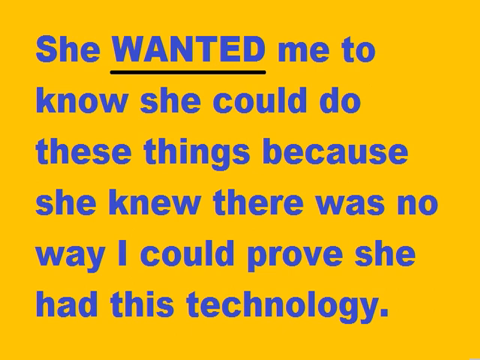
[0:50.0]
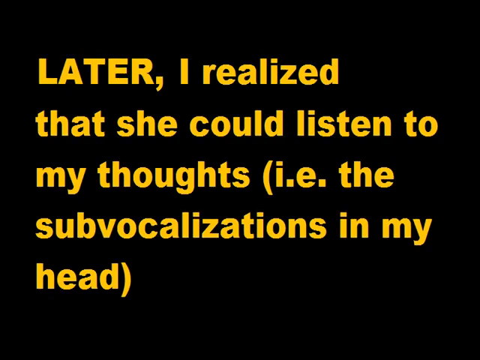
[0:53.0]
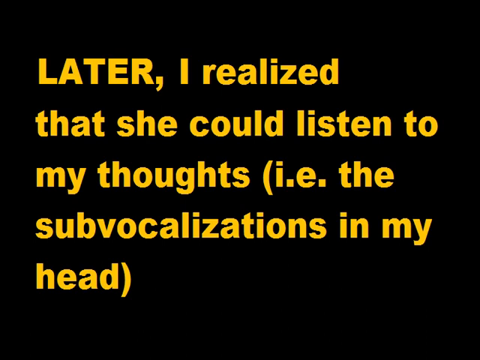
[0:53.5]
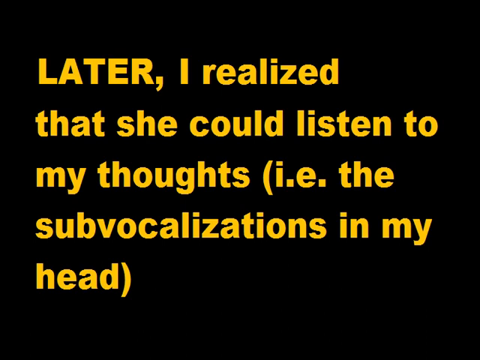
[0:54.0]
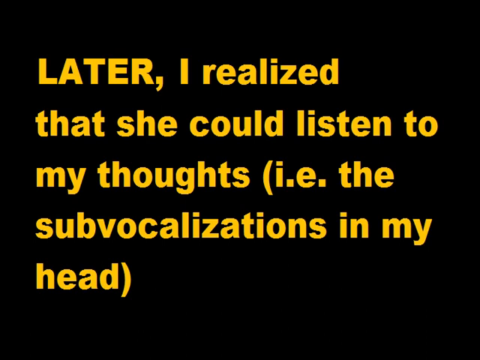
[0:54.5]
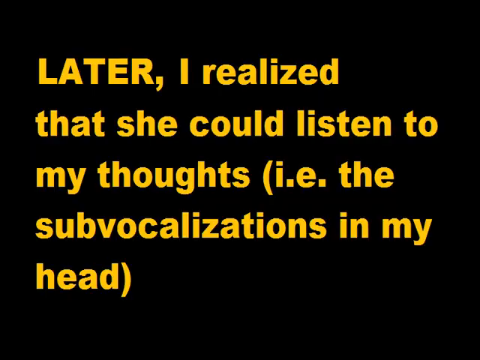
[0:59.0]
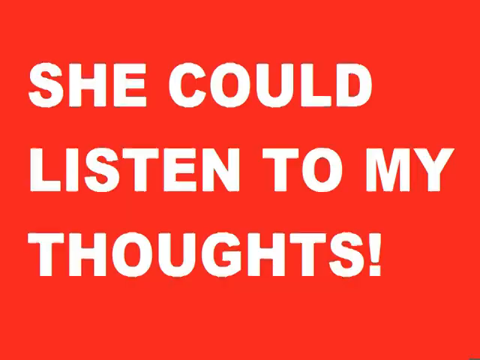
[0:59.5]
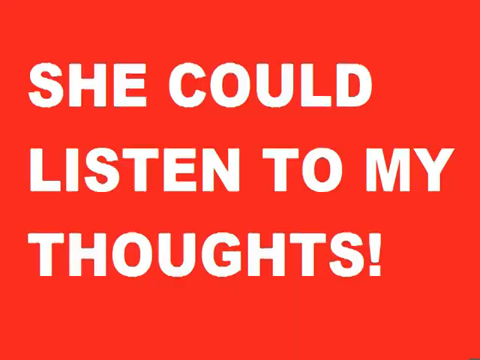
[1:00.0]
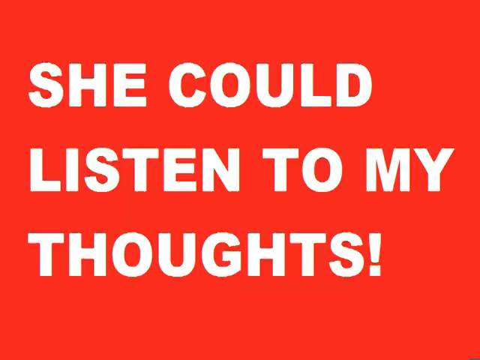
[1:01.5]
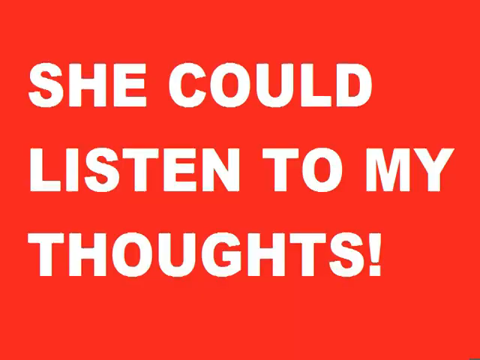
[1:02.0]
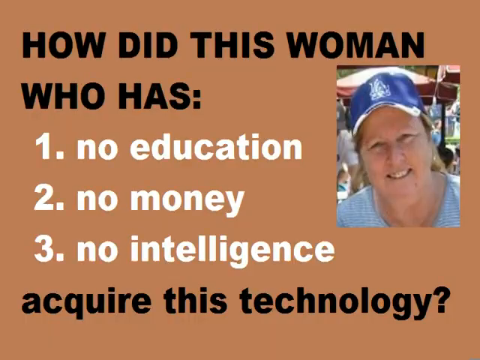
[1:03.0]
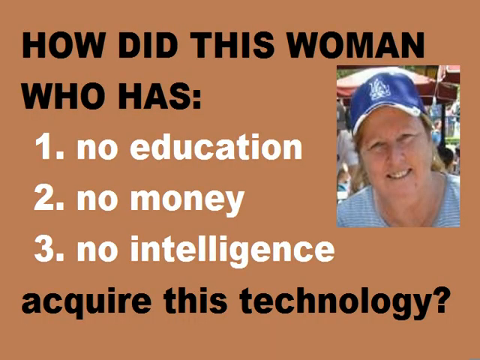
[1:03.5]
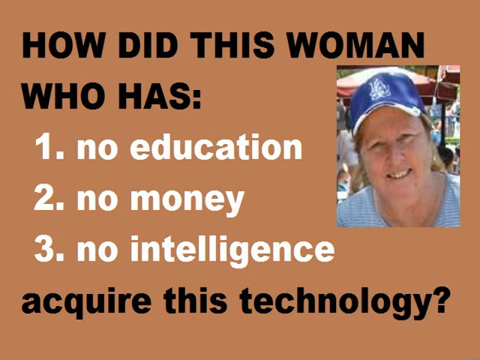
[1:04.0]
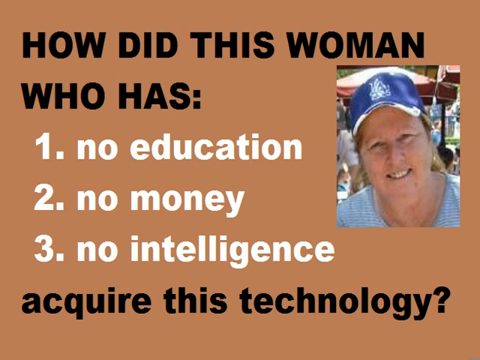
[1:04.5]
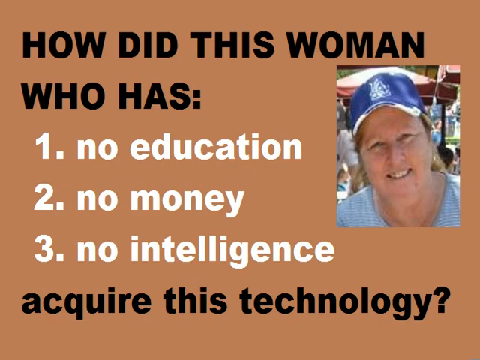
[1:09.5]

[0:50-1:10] Yellow text reads "she wanted me to know she could do these things because she knew there was no way I could." The next image shows yellow against a black background, with text that includes "with which she could listen to my thoughts." Another image shows a lady who is smiling, with text that includes "no education, number two, no money, number three, no intelligence, acquired this technology."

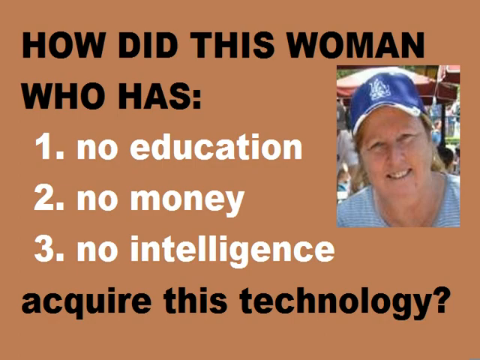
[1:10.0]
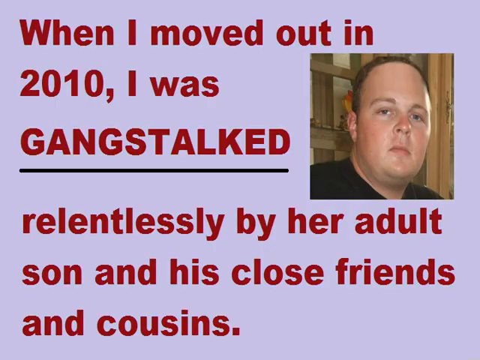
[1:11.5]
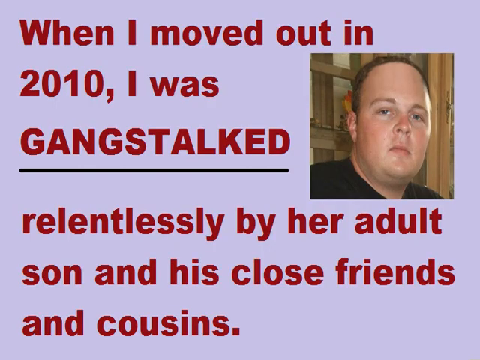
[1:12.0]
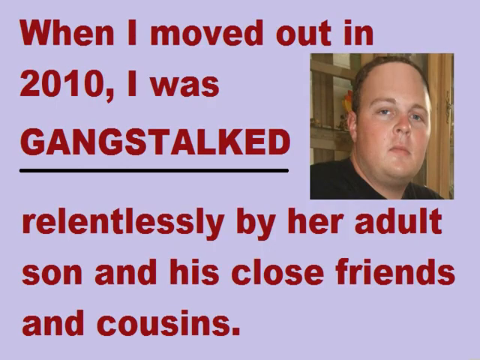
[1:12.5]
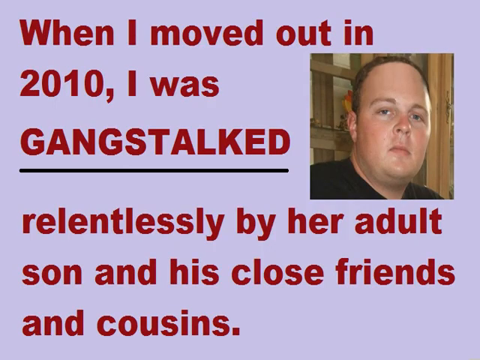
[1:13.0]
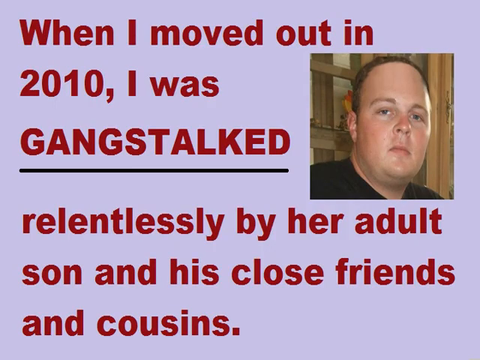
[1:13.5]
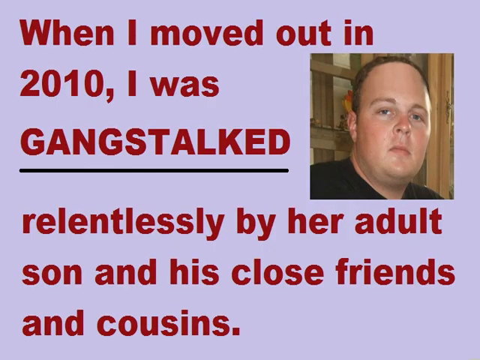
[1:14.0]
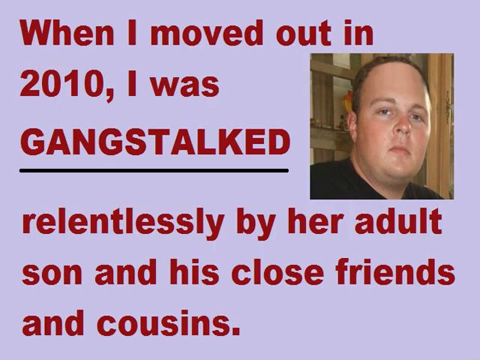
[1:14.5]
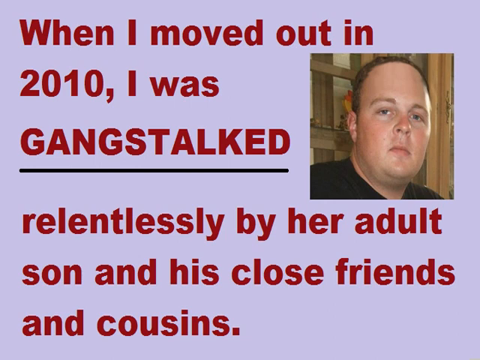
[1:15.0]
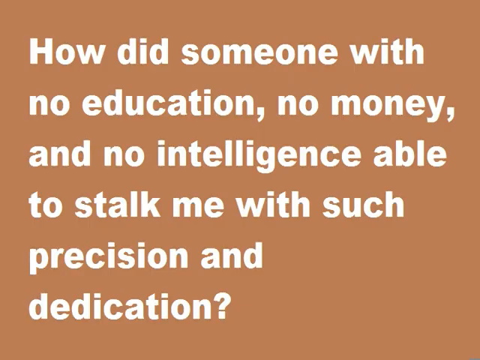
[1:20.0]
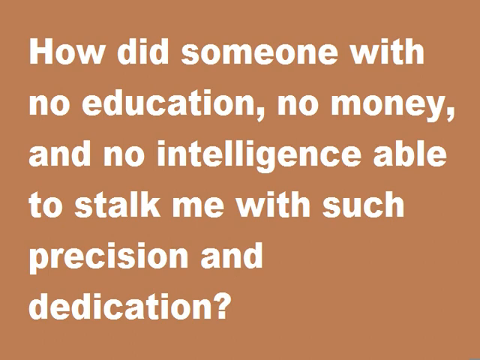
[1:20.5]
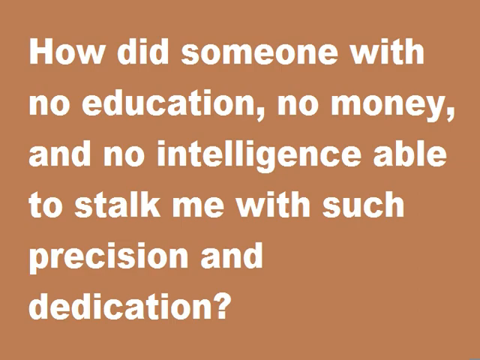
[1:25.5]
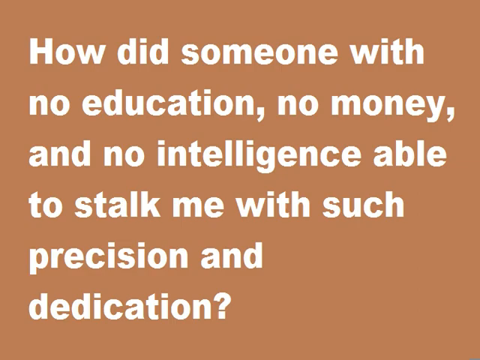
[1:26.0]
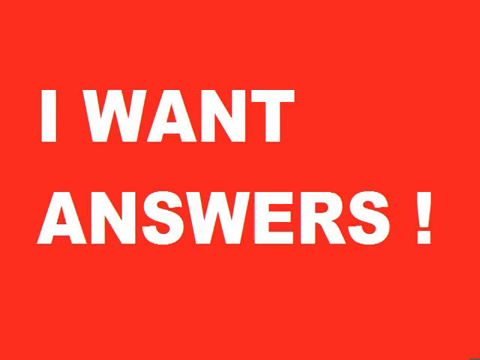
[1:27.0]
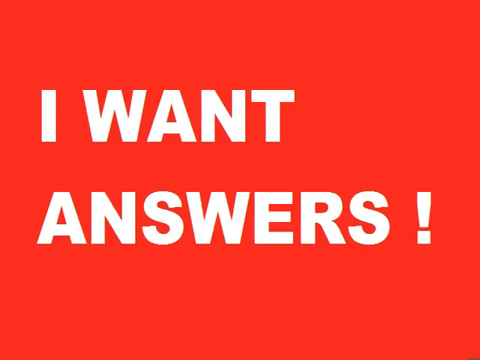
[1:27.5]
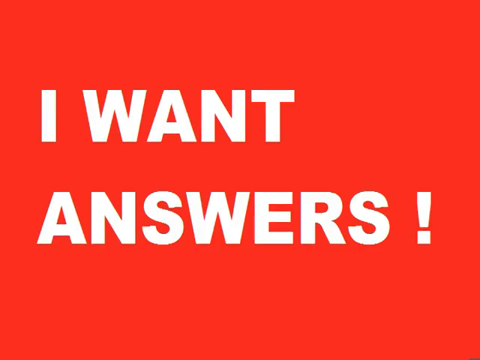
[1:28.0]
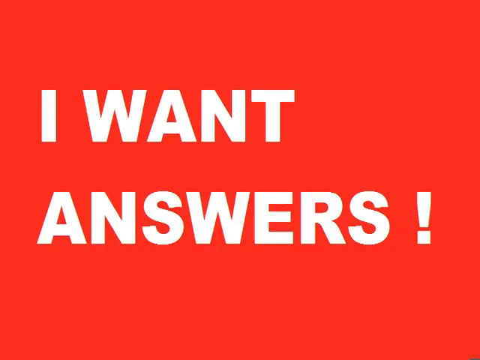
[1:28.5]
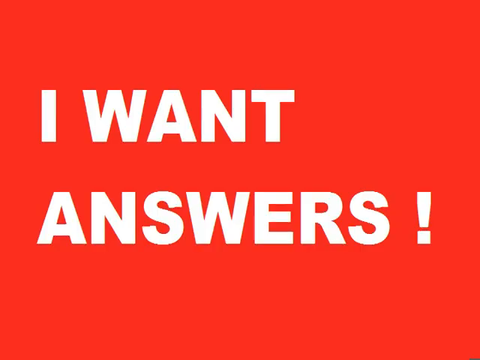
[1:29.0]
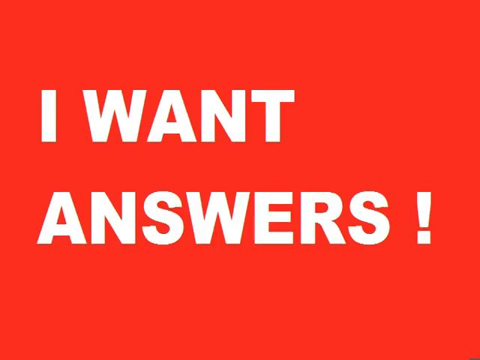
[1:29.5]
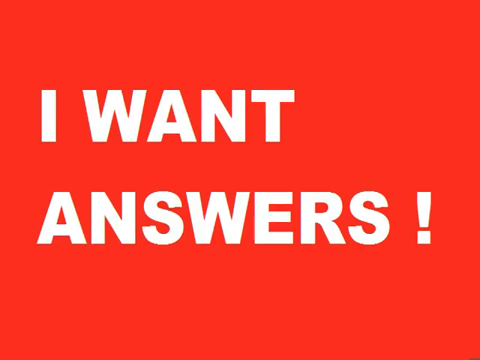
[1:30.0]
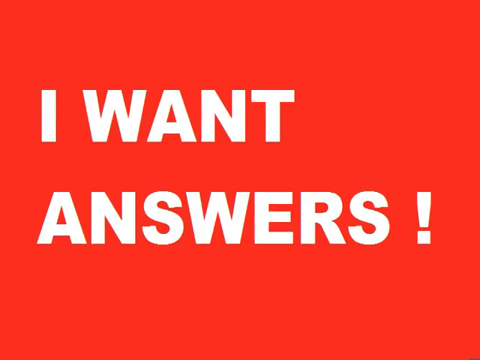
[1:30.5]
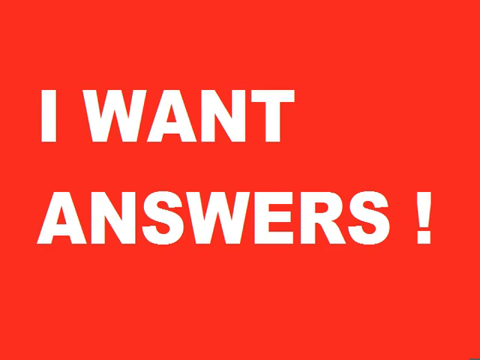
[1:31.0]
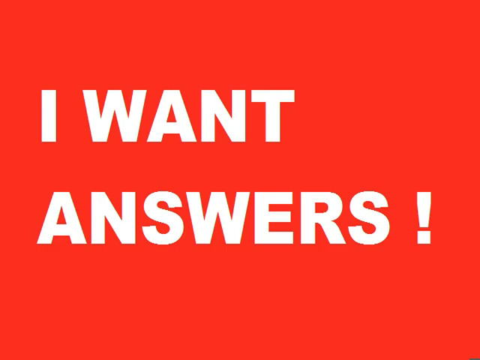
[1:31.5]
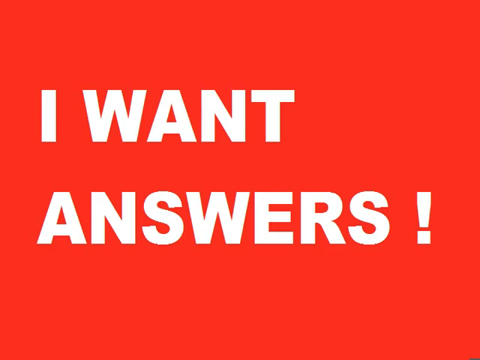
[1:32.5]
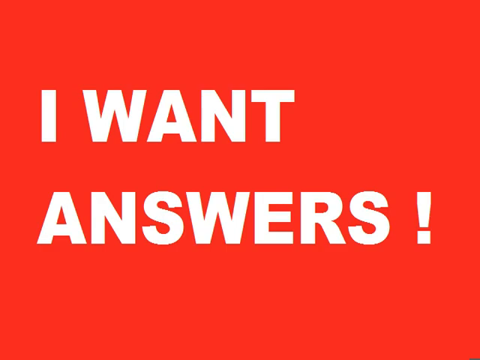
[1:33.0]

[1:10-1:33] The image of the woman with a big hat, smiling, has text that reads "How did this woman, who has number one, no education, two, no money, three, no intelligence, acquire this technology?" The next image shows a white man in a black coat with text that reads "When I moved out in 2010, I was then stalked relentlessly." Another image with a brown background reads "How did someone with no education, no money, and no intelligence," followed by text reading "I want answers" with an exclamation mark.